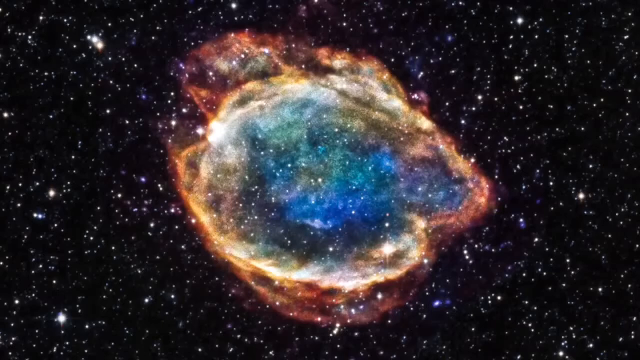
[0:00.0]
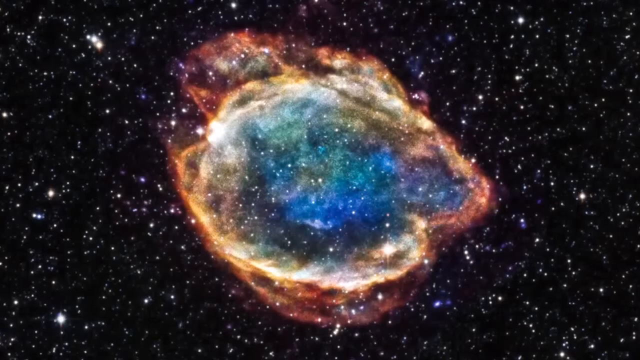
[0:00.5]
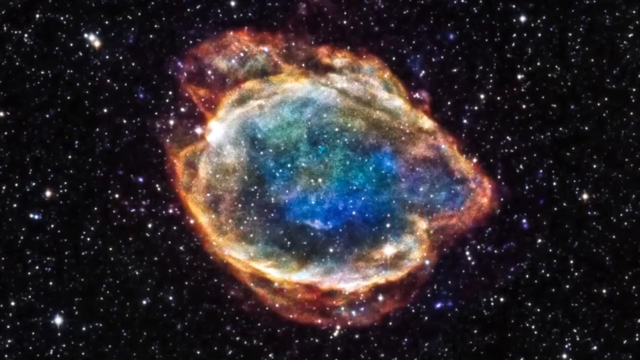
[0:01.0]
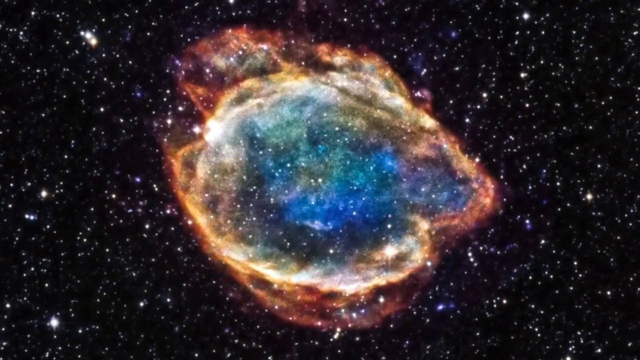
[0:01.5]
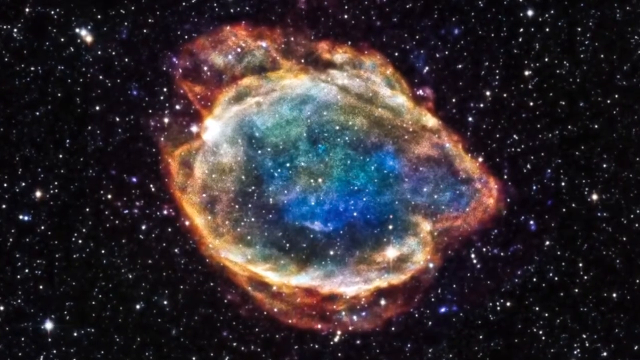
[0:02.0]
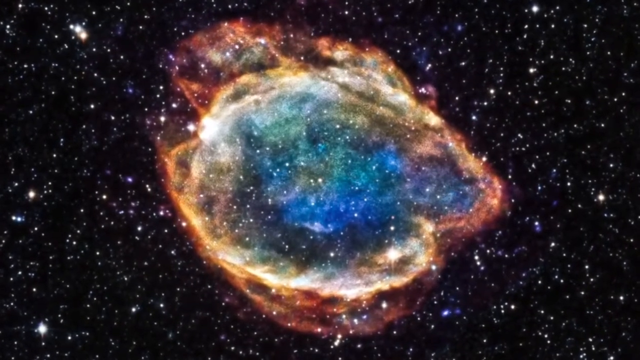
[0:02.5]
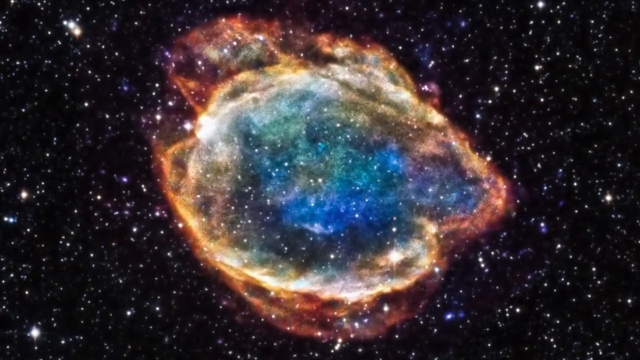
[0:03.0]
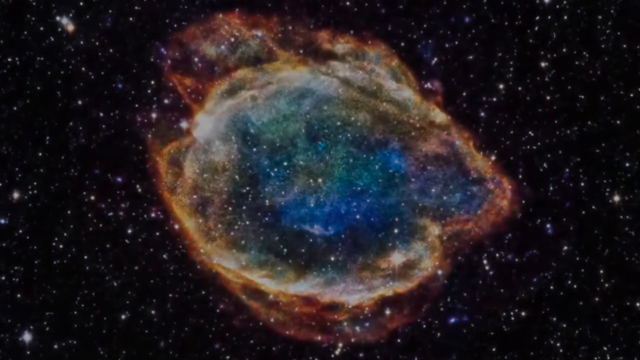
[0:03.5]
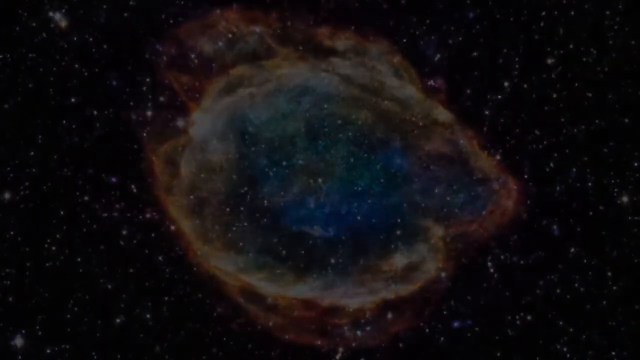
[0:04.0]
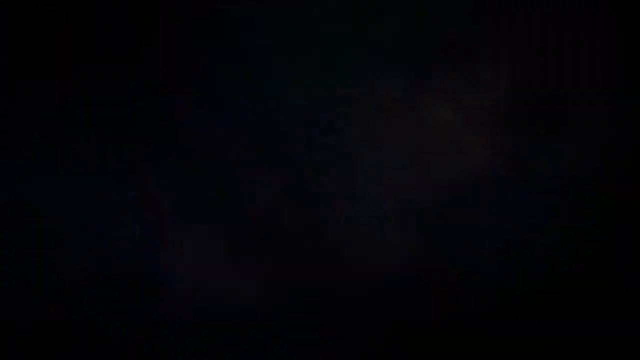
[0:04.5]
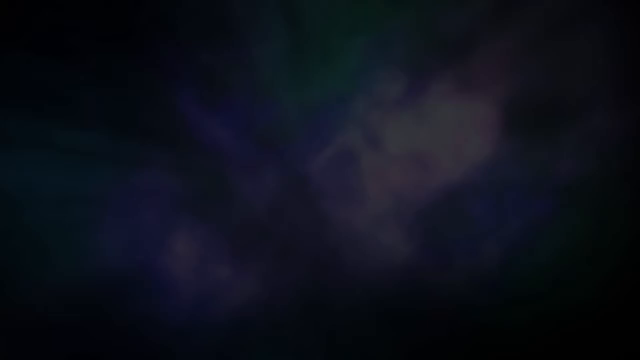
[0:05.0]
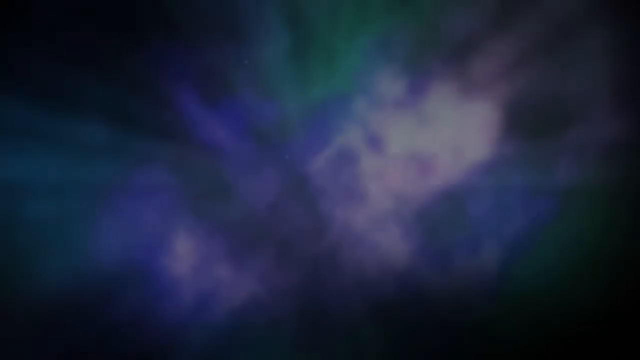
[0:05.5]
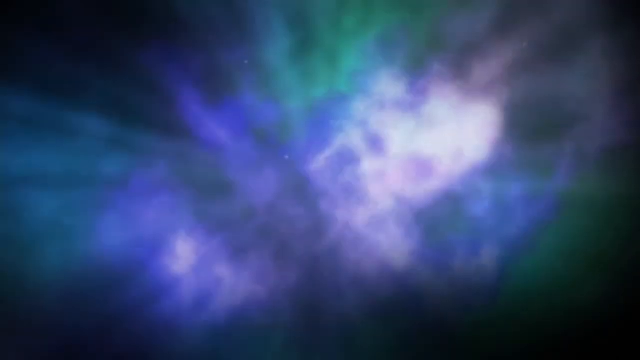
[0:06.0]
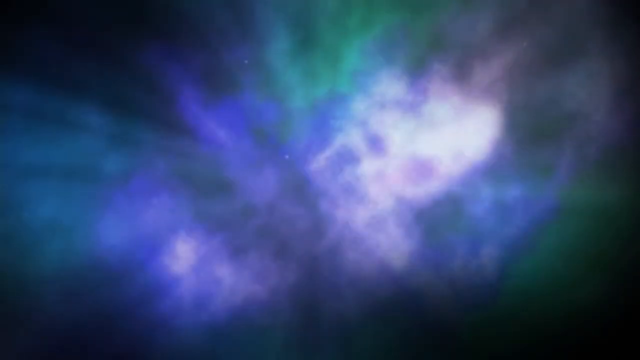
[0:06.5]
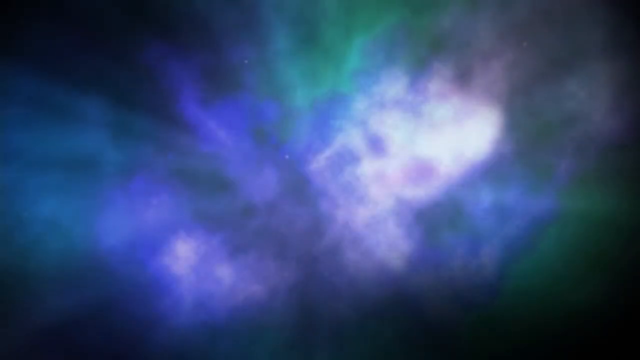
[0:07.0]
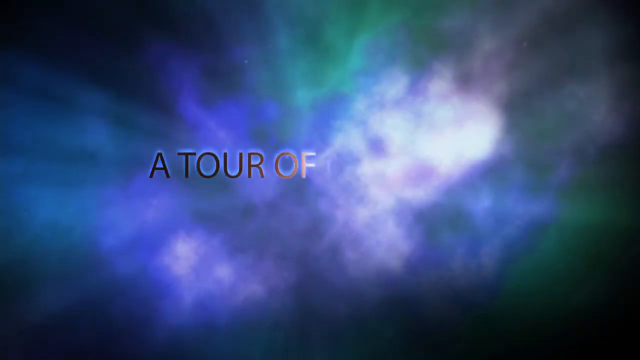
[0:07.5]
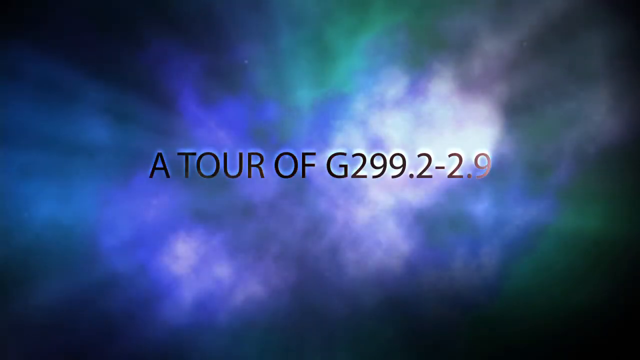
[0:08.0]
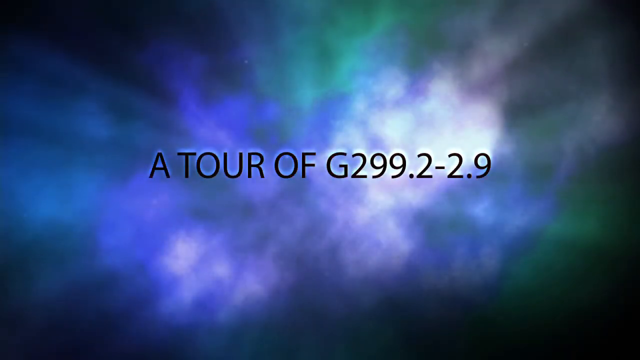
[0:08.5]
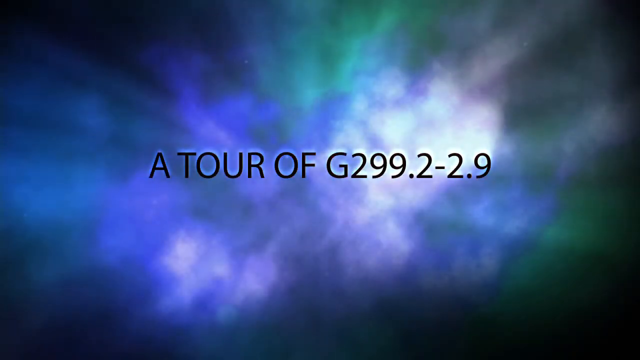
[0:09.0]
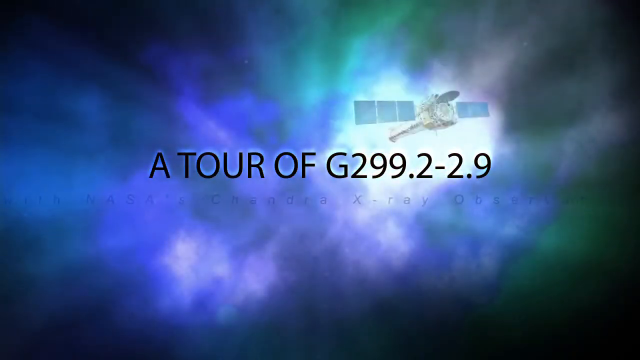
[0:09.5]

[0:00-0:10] A black sky filled with white stars has a blue and green cloud in the center, circled by a yellow cloud around the blue and a red ring around the yellow. The view zooms in on it and it disappears, giving way to bright colors of green, blue and white on a black background. Black text in the very center reads "a tour of G299.2-2.9". A satellite then appears above "G299.2-2.9"; it has a cylinder shape in the center that is larger in the back and smaller in the front, with three blue panels on each side. Below the black text, blue text appears that reads "with NASA's Chandra X-ray Observatory".